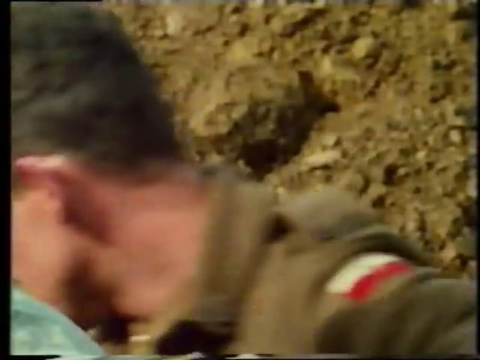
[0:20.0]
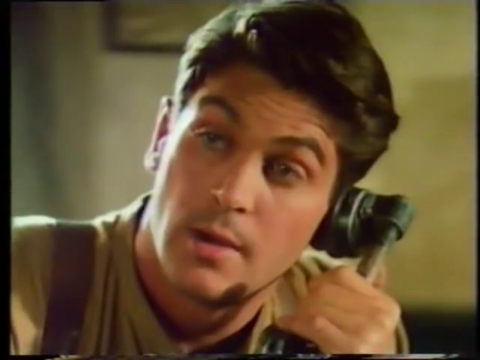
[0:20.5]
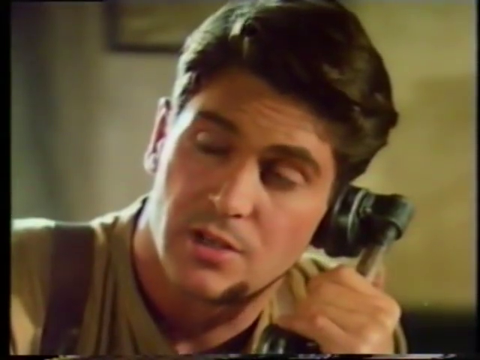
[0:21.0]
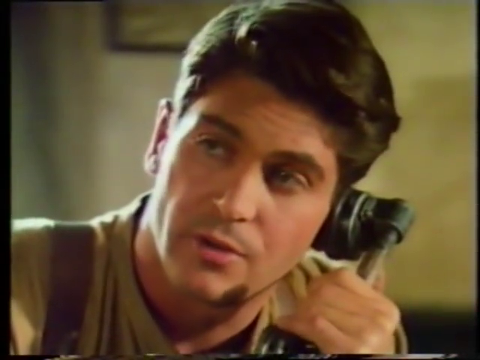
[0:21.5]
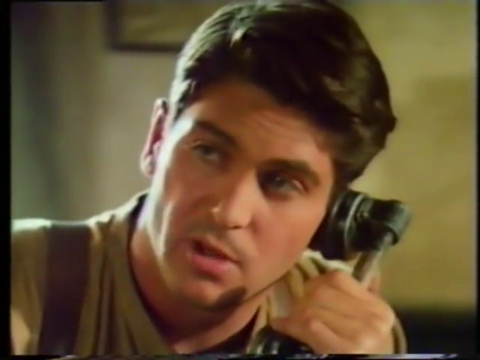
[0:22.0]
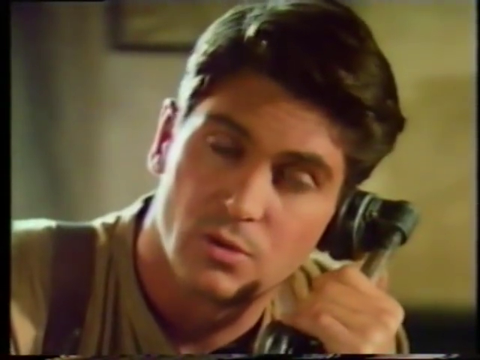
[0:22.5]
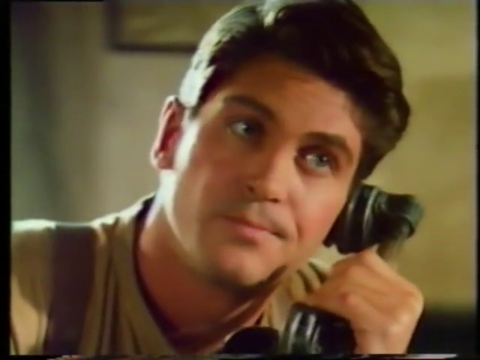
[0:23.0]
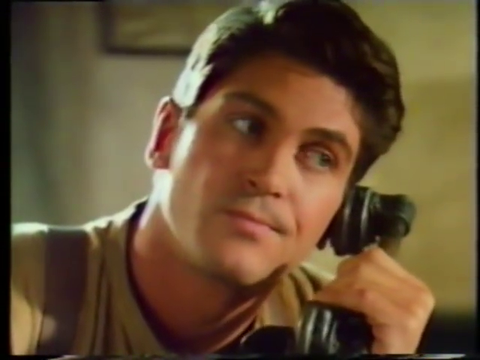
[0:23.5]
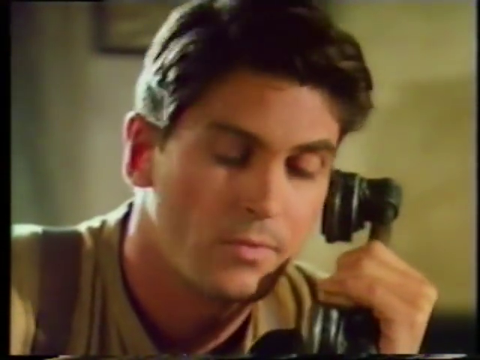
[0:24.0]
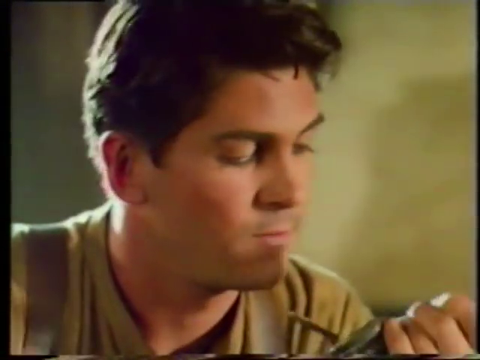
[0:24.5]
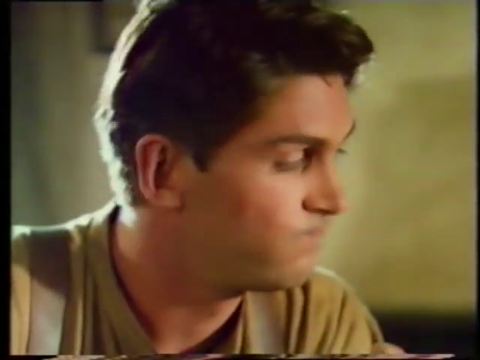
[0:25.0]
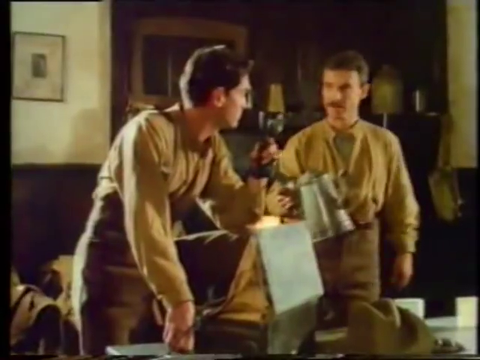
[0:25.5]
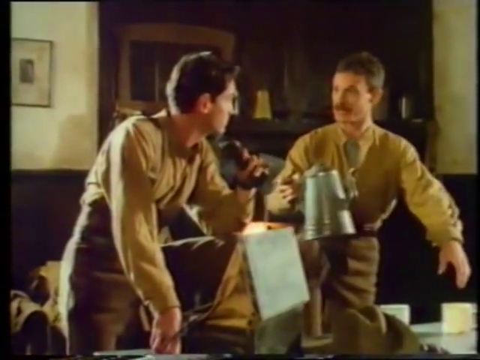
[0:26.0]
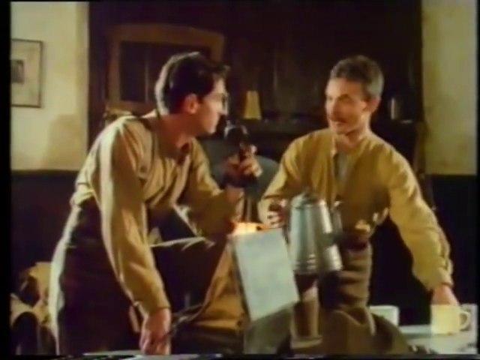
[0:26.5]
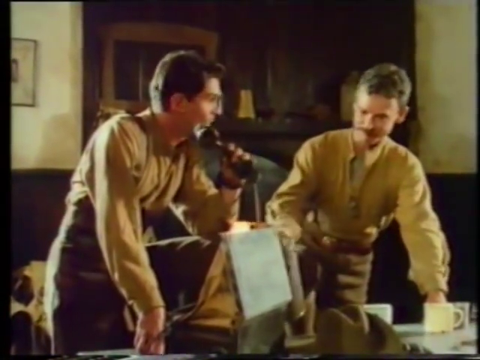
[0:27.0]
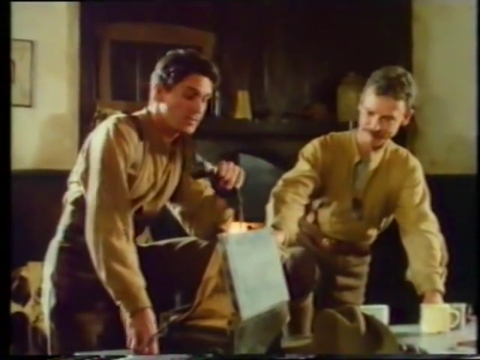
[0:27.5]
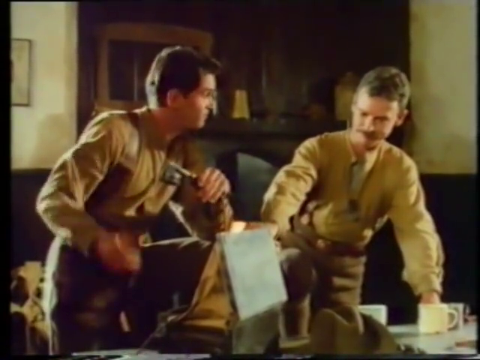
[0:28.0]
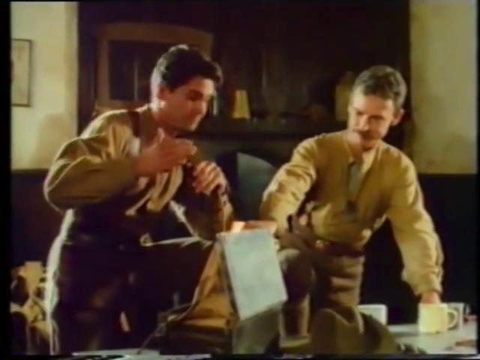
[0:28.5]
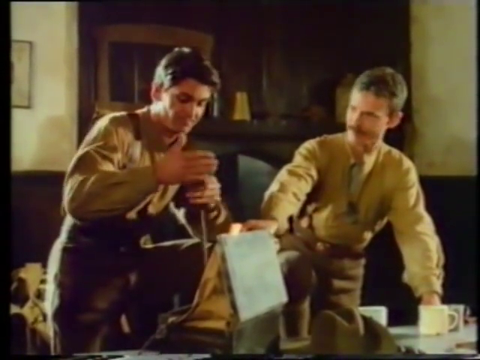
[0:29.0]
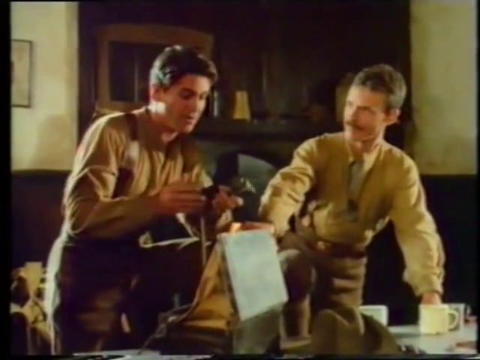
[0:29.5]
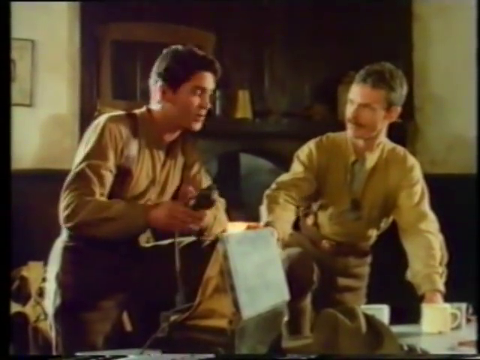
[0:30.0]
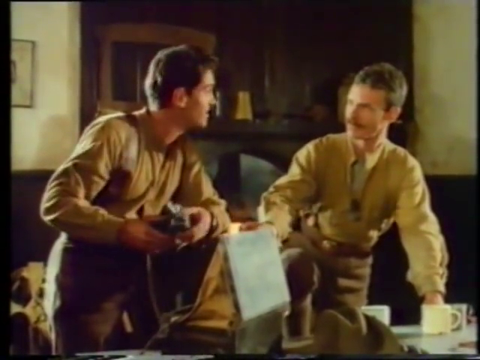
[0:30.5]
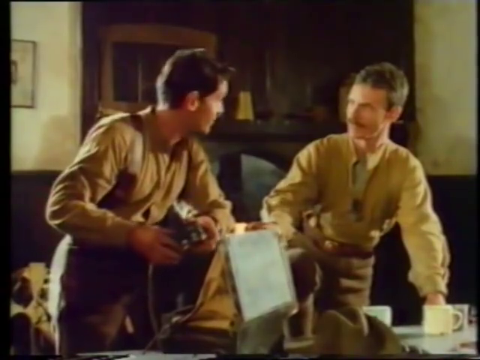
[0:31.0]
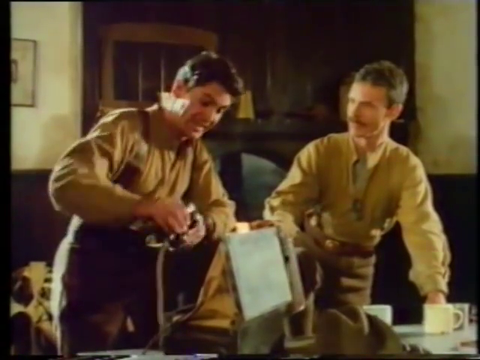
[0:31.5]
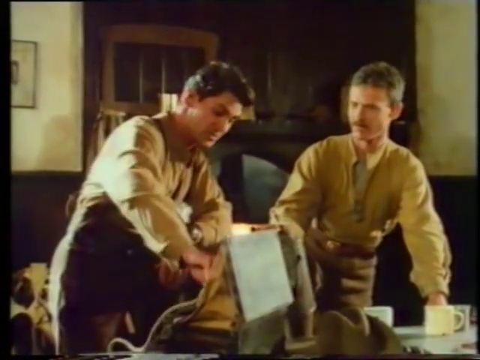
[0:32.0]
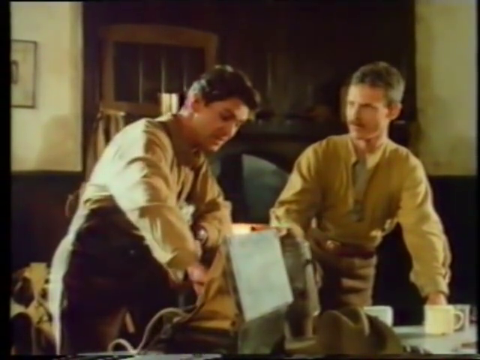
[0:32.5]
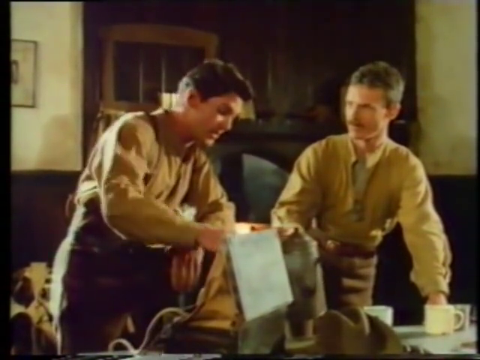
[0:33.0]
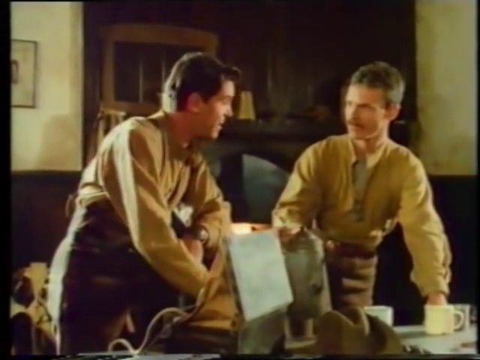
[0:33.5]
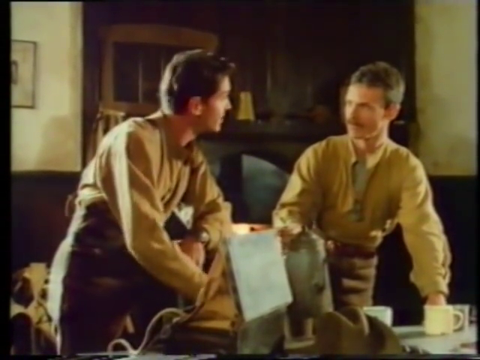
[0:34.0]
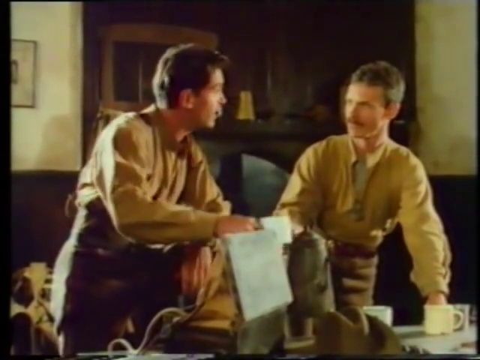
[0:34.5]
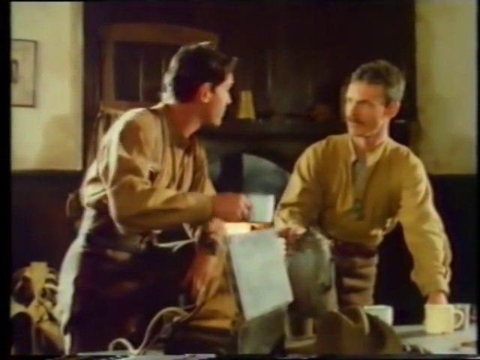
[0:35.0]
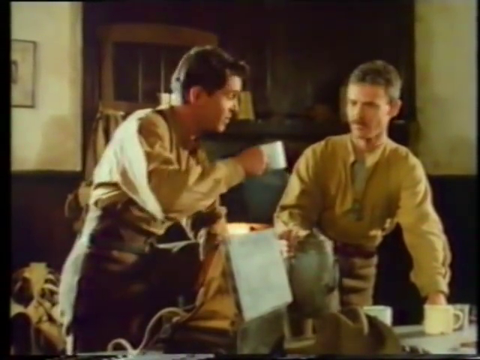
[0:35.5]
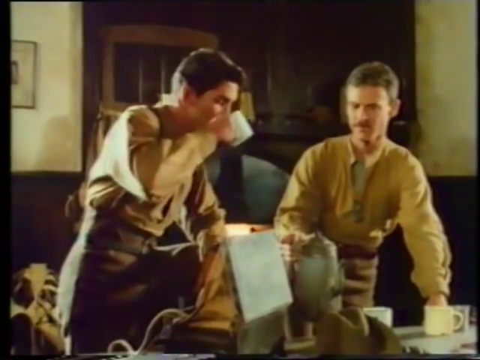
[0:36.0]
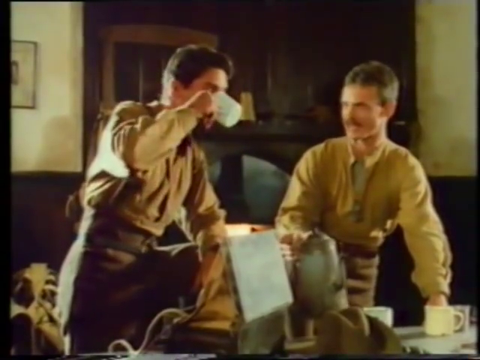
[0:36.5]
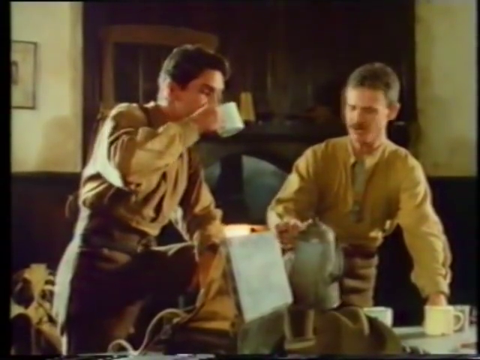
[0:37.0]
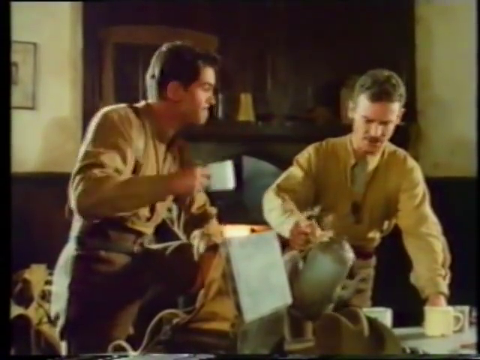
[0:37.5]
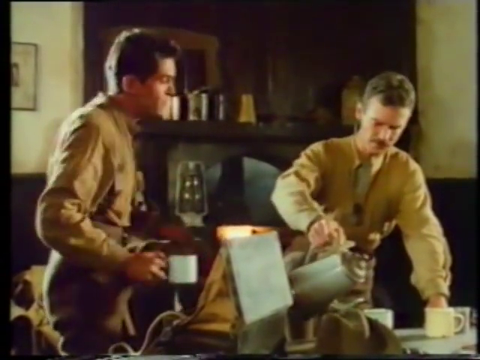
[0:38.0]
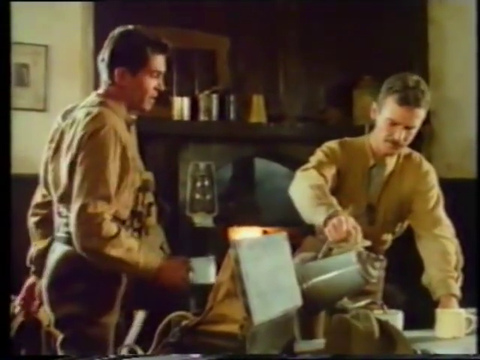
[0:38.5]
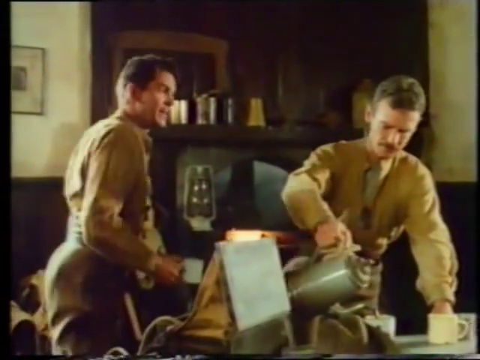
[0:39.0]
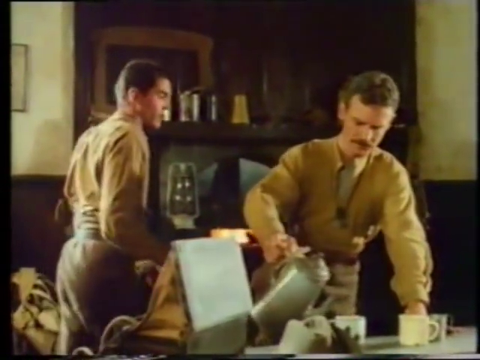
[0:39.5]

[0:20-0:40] A man makes a call on a telephone, an old model of telephone. Another man comes in with a kettle of boiling hot water. The setting is an old house with old utensils. Both men wear brown shirts and khaki-coloured trousers, and both have short hair. One of them picks up a cup of tea and bends toward the table as they have a conversation. The other takes his foot down from the table and walks away from it. In another scene, a man in a military uniform in the jungle kneels with one knee to the ground. The scene then returns to the two men; one puts his leg on top of the table. On the table are a cup, a military cup, tea cups and some other objects. Behind the table is a long shelf with some cups, some books and a lamp holder.